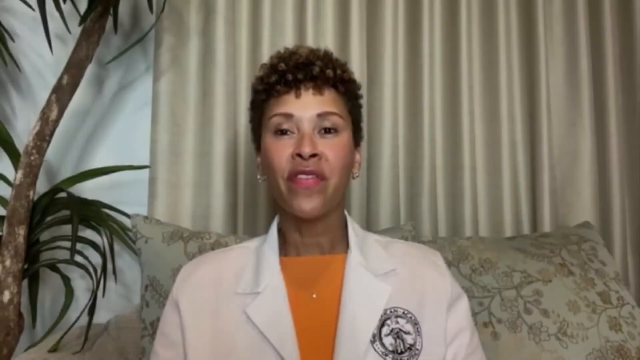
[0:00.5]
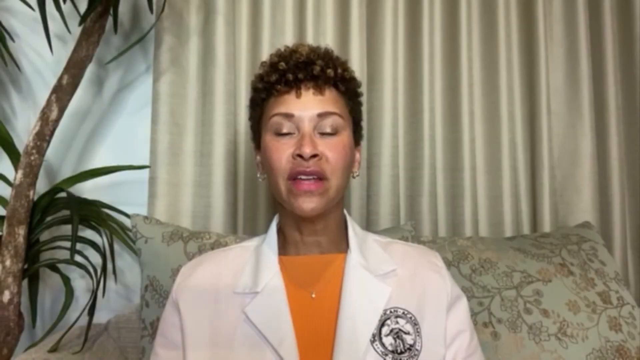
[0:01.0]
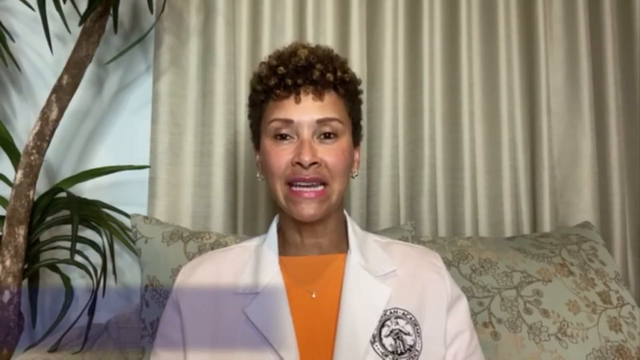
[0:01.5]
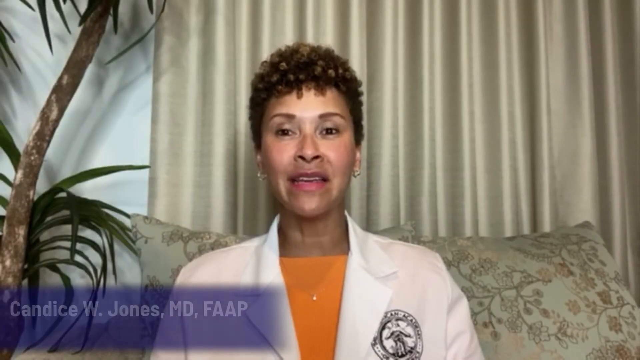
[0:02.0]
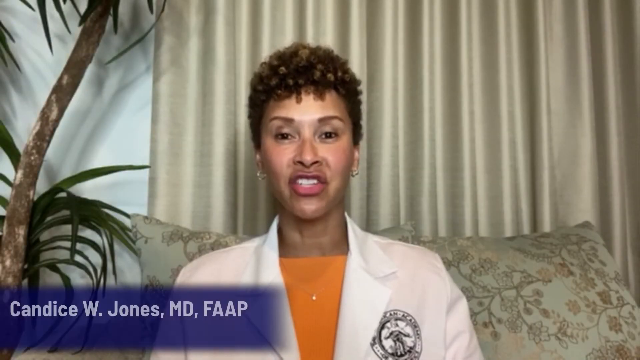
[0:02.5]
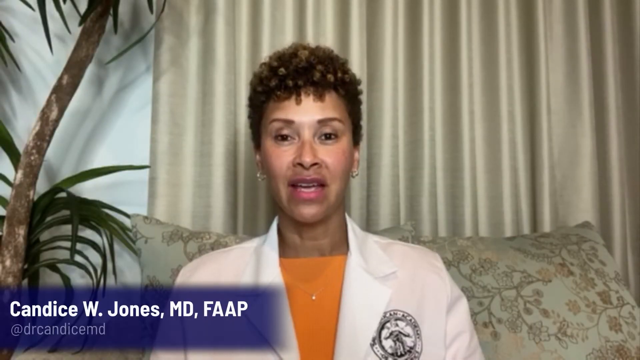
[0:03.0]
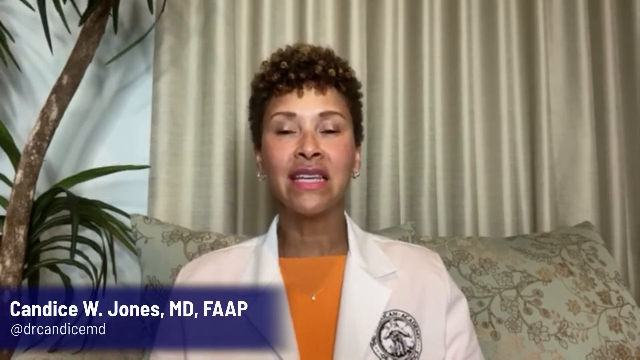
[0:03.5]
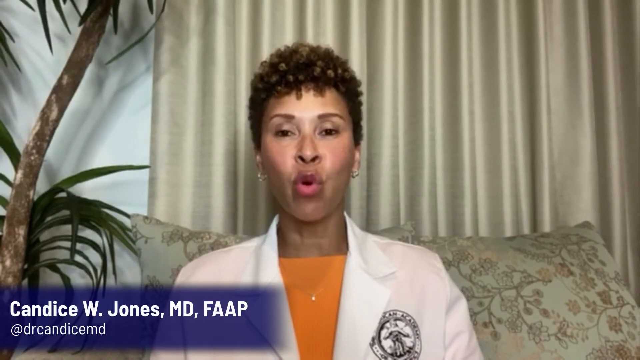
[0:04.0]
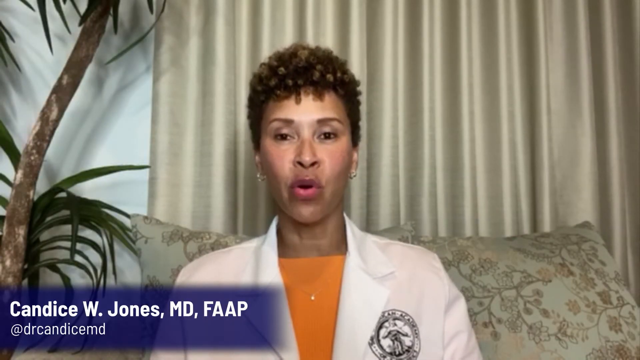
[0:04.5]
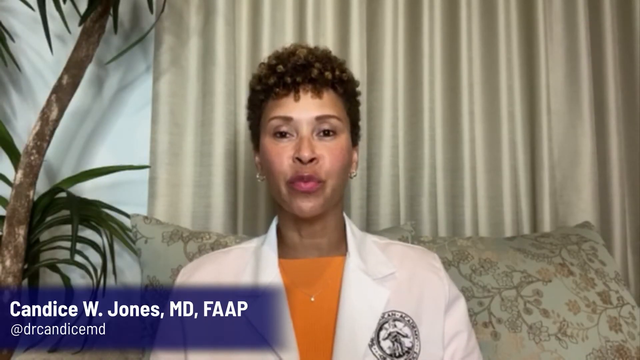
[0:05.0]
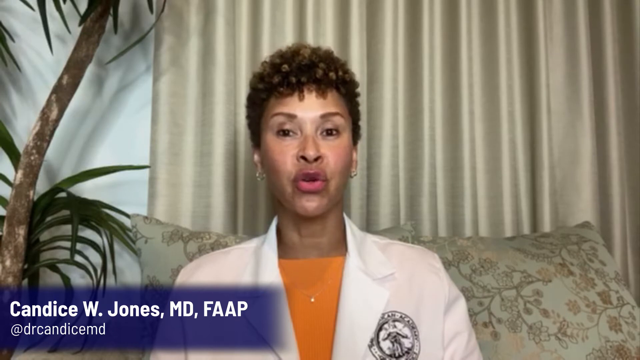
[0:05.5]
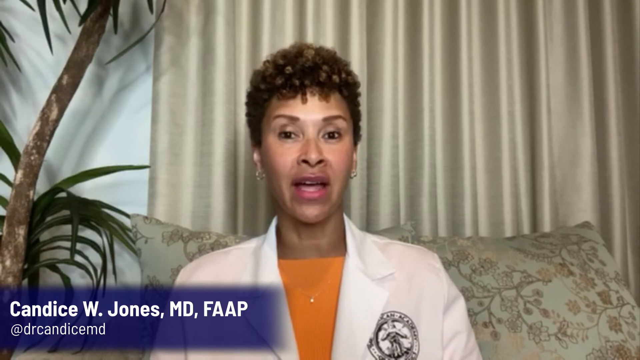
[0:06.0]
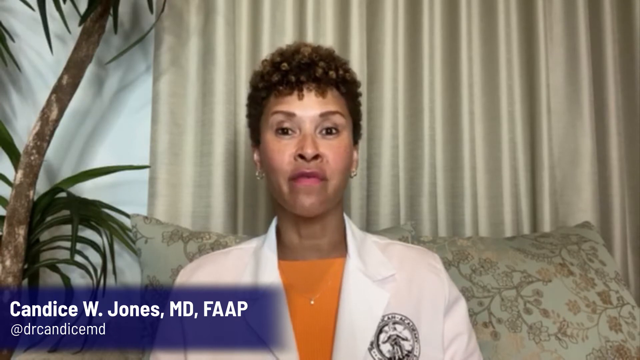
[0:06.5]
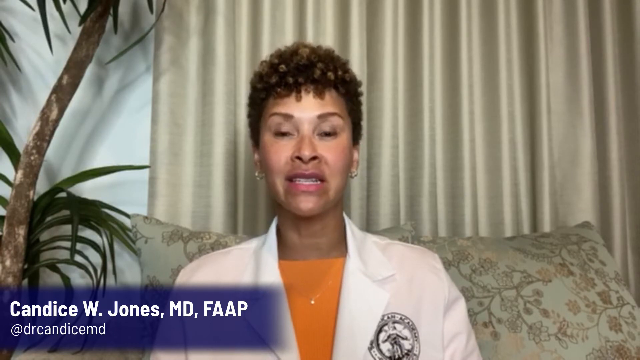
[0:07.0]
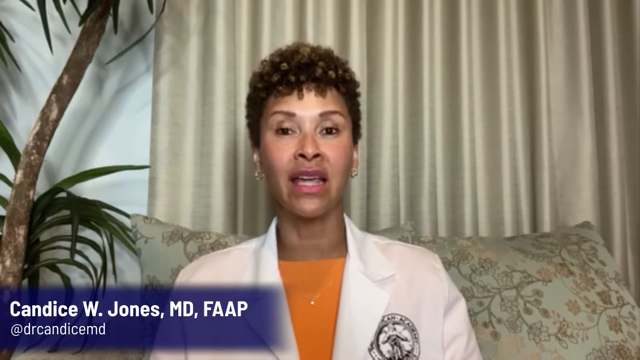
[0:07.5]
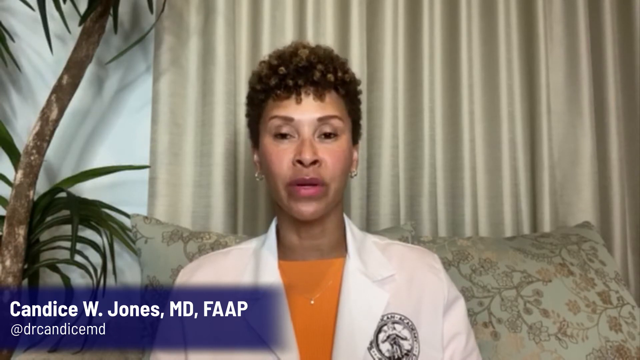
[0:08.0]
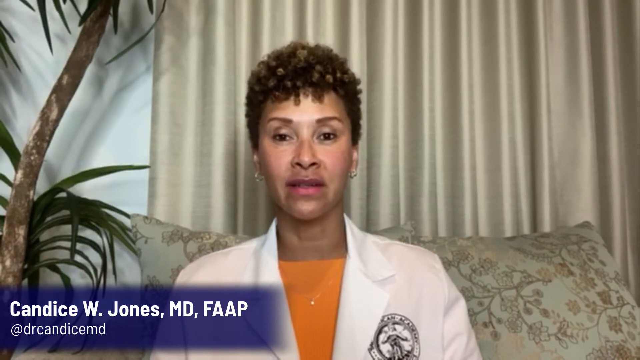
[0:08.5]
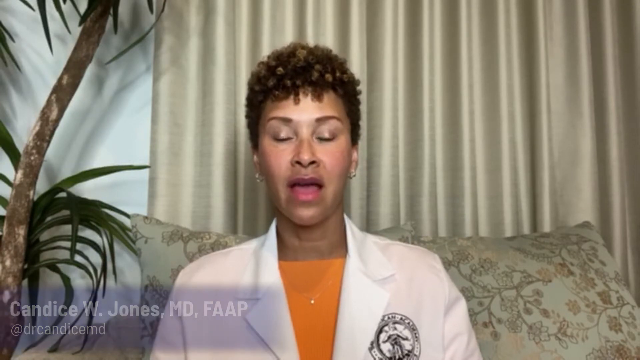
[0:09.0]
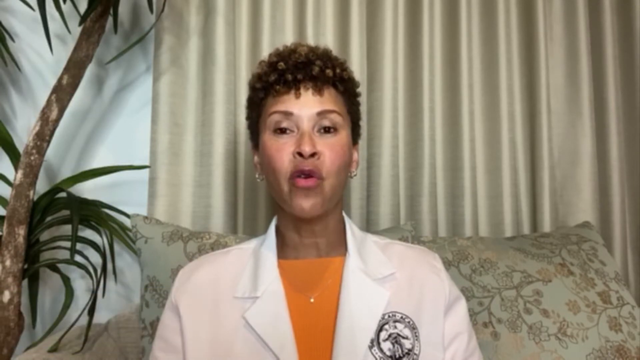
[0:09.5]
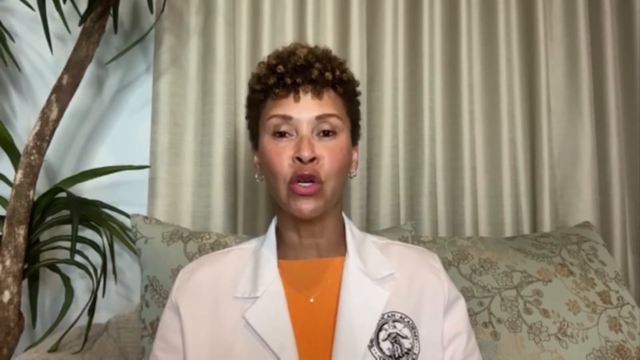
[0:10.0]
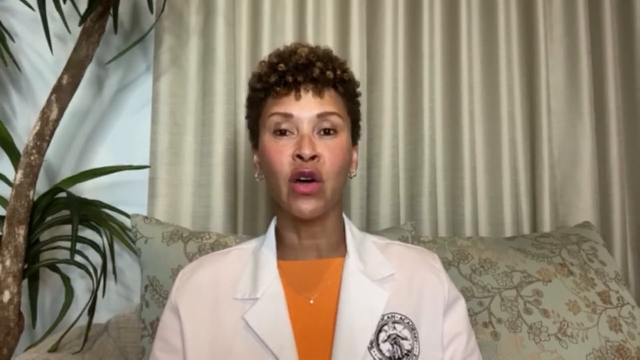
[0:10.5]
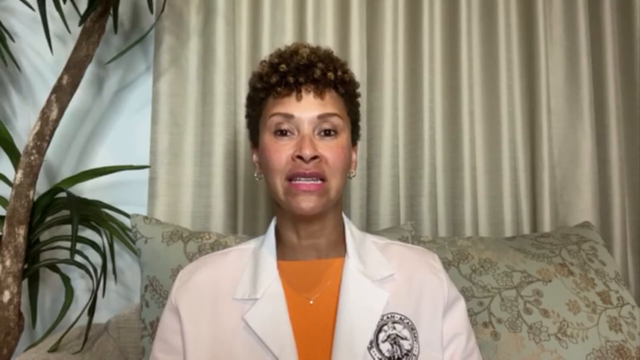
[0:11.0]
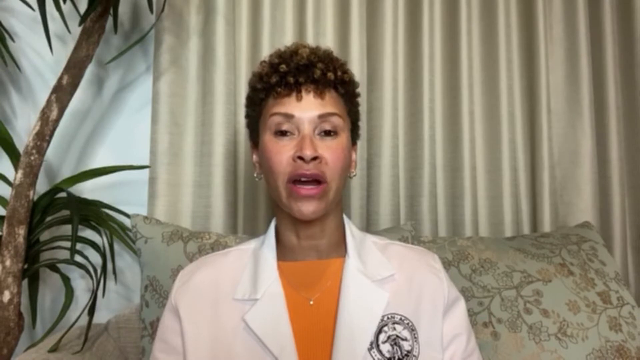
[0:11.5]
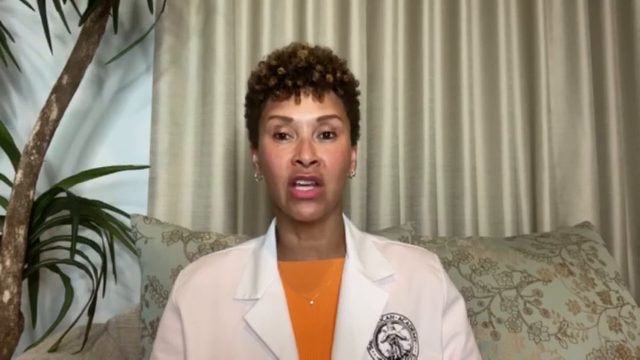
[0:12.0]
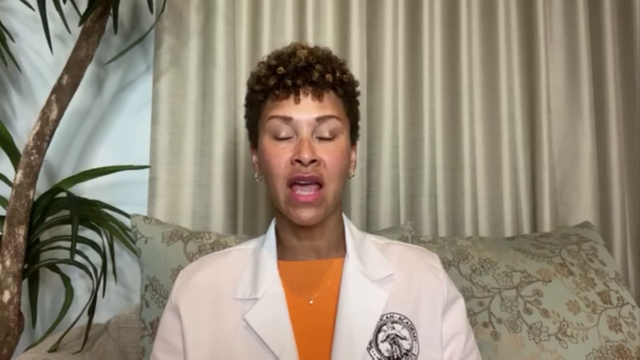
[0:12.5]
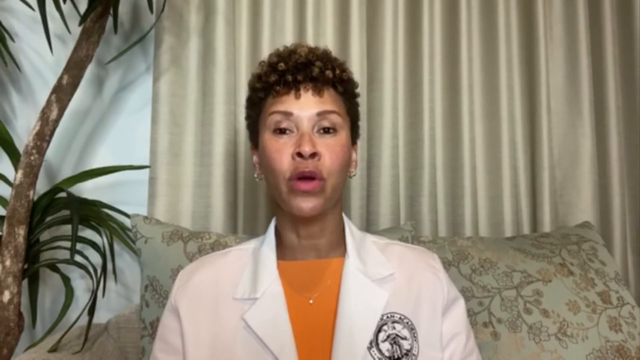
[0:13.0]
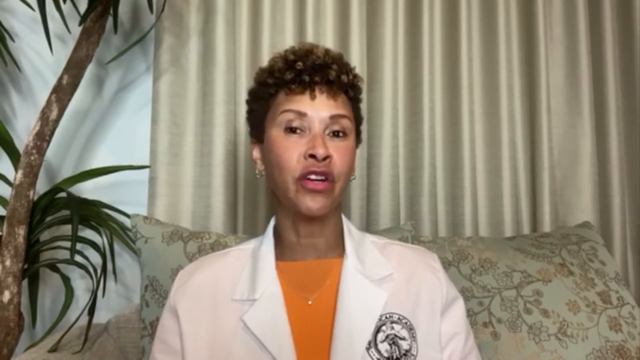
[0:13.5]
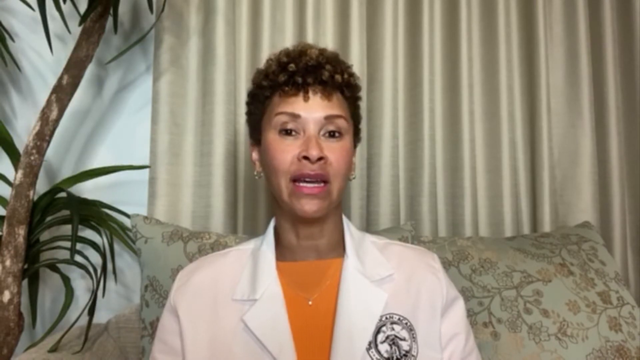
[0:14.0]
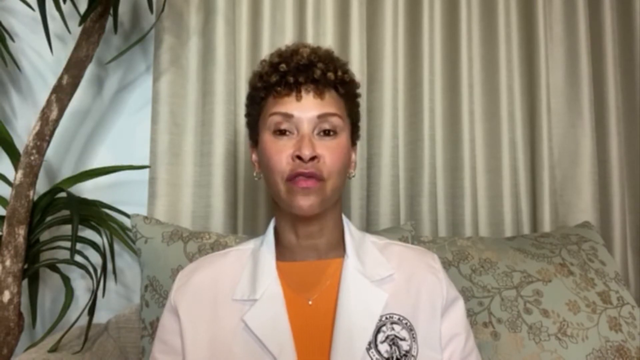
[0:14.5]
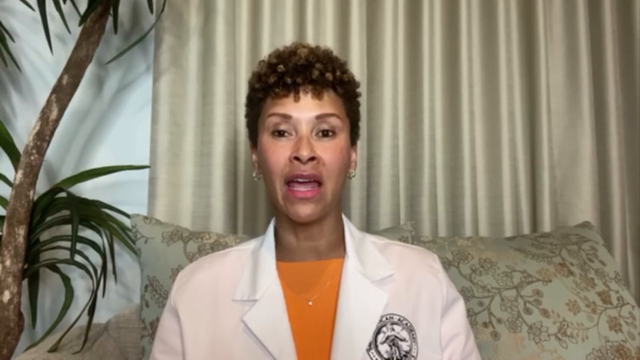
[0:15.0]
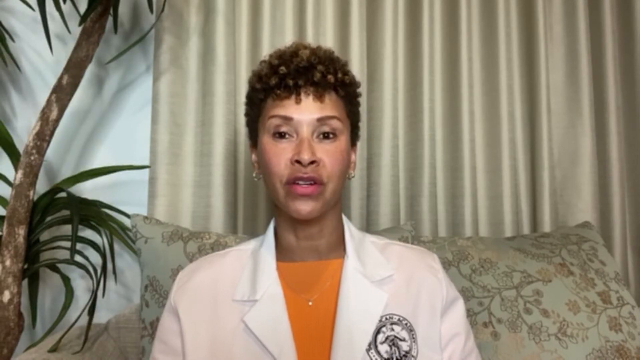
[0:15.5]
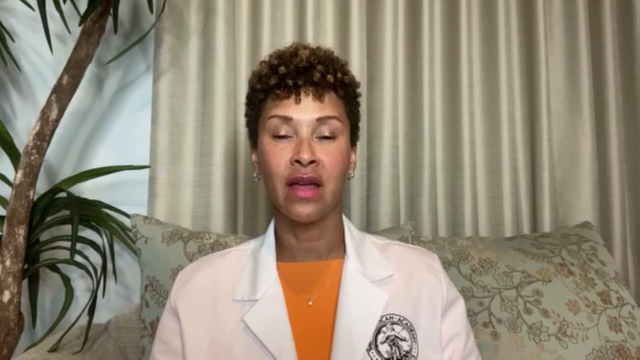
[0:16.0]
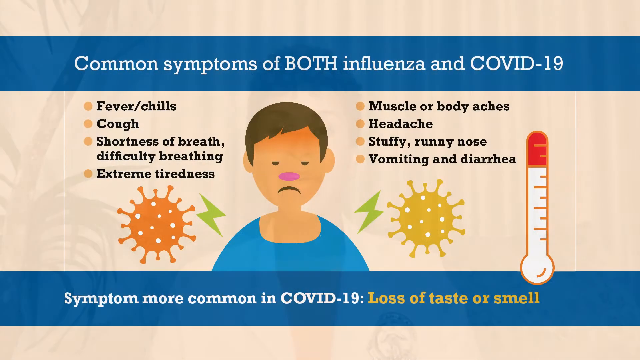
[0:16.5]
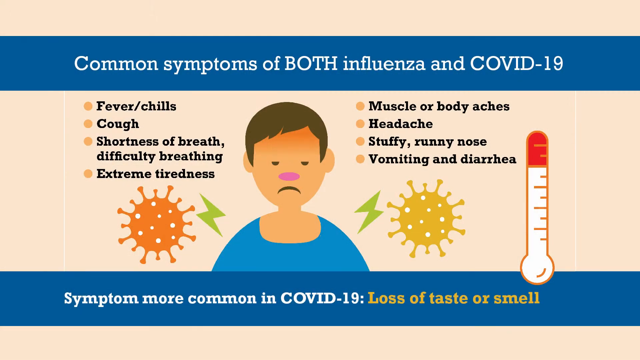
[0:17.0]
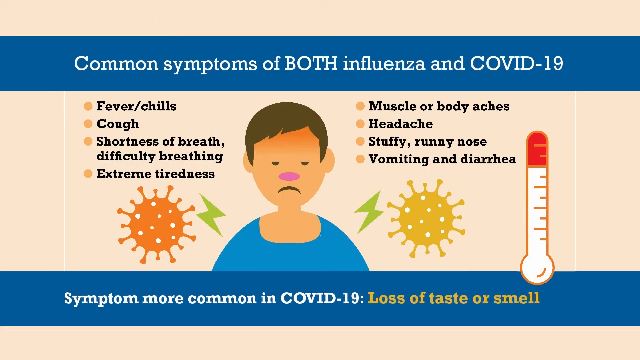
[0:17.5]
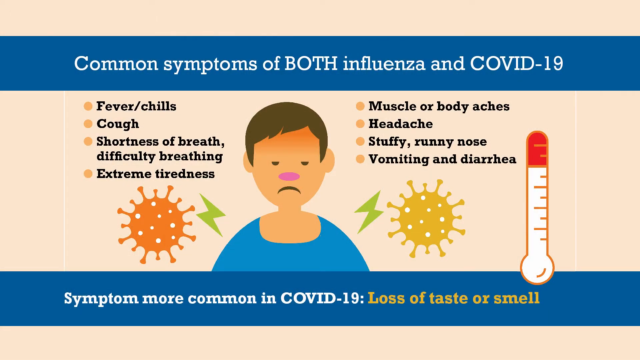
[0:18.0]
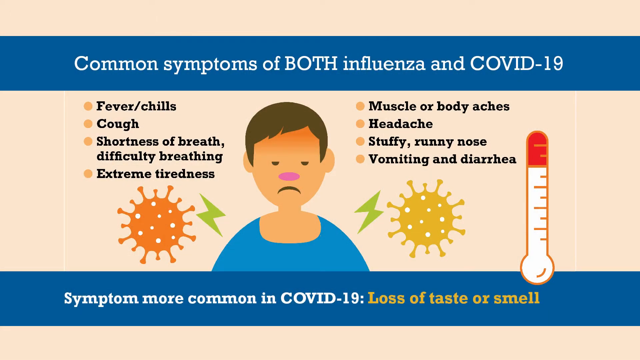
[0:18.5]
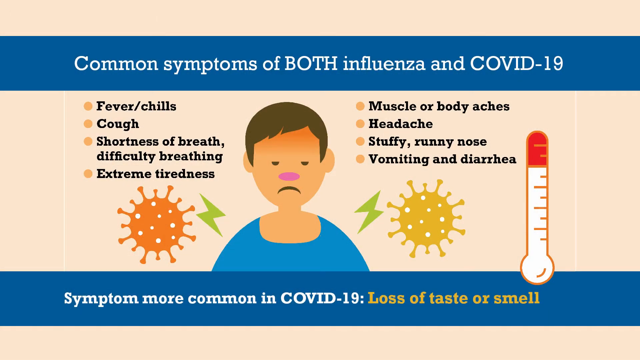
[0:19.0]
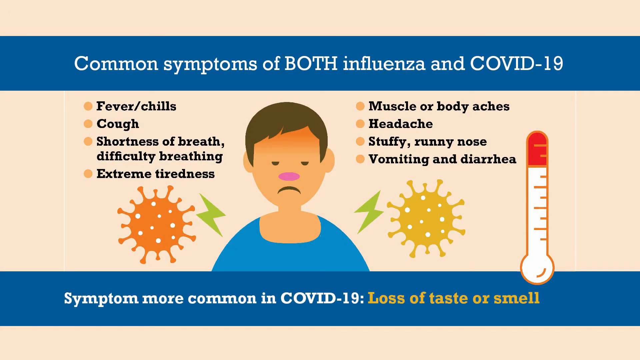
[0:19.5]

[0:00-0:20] A woman described as American, wearing an orange top covered by a white lab coat, is seated on what looks to be a loveseat in a living room type setting. To her left is a palm tree, and behind her are tan curtains closed over a window. Pillows from the loveseat are visible behind her; they are also a cream tan and have a floral tree branch pattern. She has short, neatly kept hair and wears gold earrings in both ears. She faces directly at the viewer, smiling and speaking. At the bottom left of the screen, white text reads "Candace W Jones MD F A A P at Dr Candace MD." She continues speaking to the camera, looking directly at it. On her lab coat's left lapel is a black emblem, presumably of the hospital or medical system she works for. The video then switches to a cartoon image of a sick person: a very sad-looking Caucasian man with short brown hair, a blue shirt, a pink nose and a frown. Above him is a blue banner with white text that says "common symptoms of both influenza and covid19."